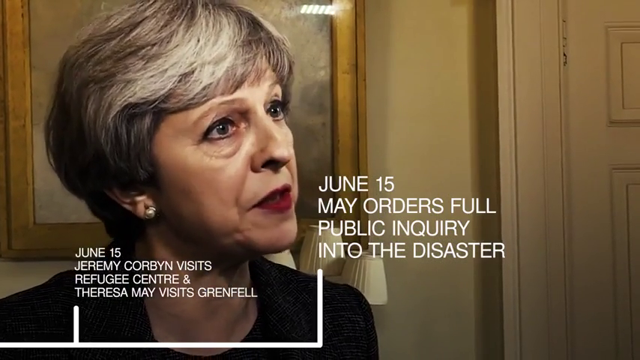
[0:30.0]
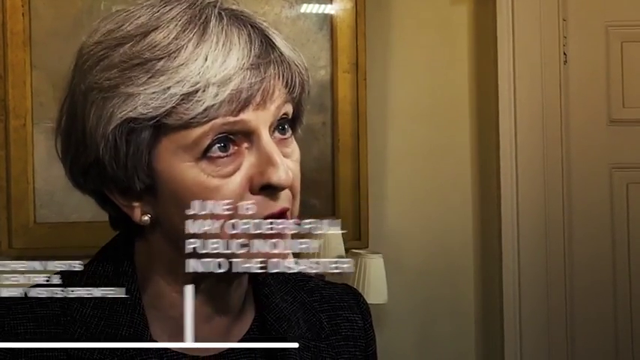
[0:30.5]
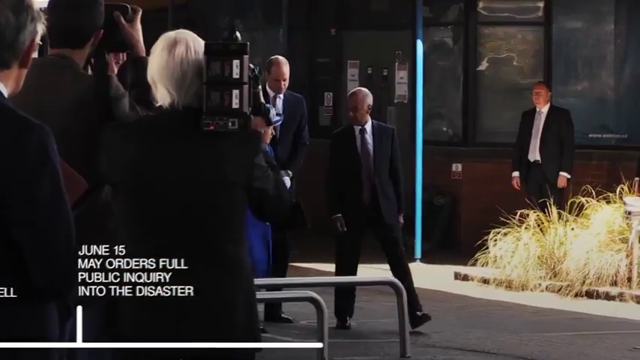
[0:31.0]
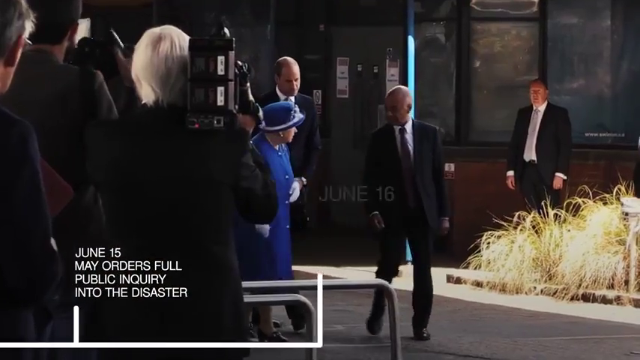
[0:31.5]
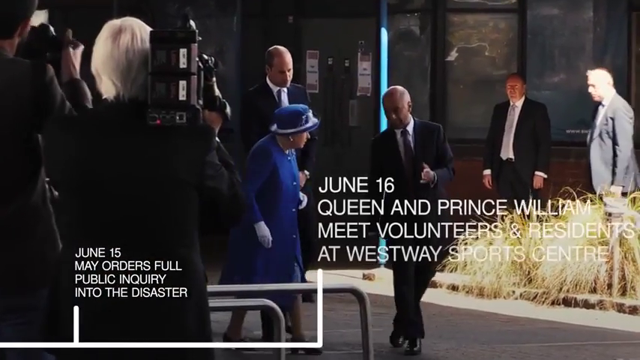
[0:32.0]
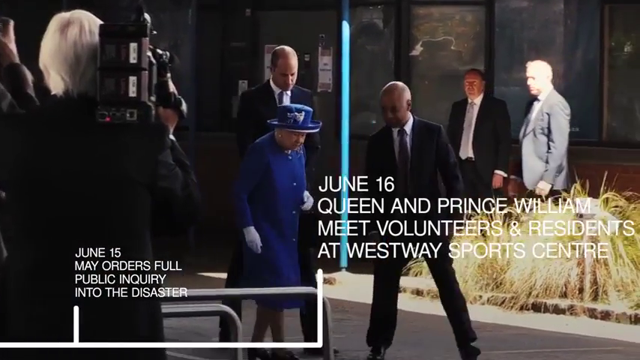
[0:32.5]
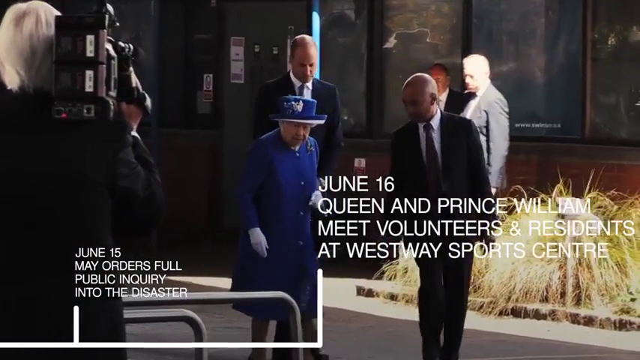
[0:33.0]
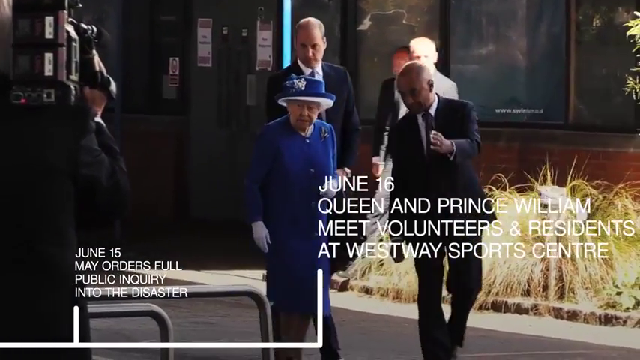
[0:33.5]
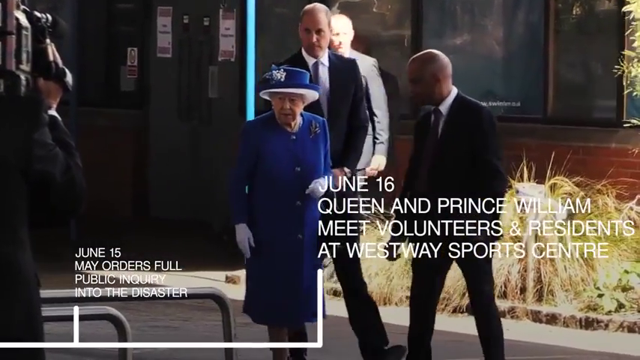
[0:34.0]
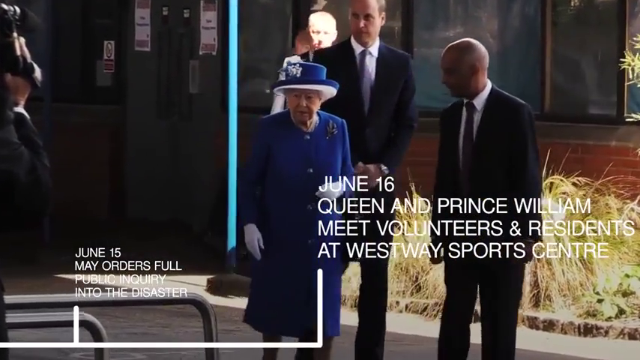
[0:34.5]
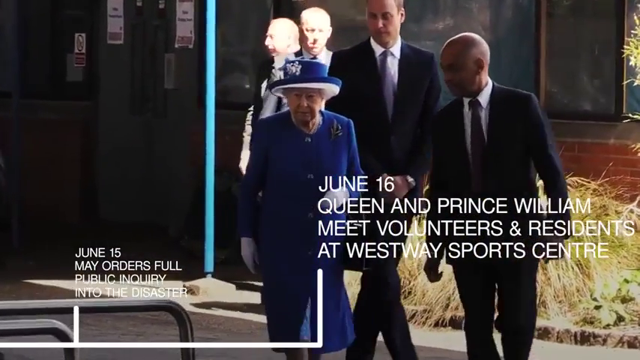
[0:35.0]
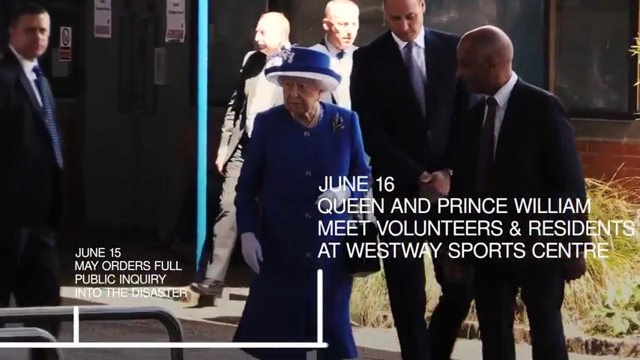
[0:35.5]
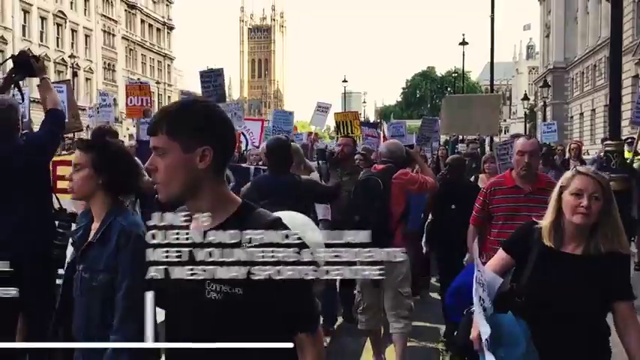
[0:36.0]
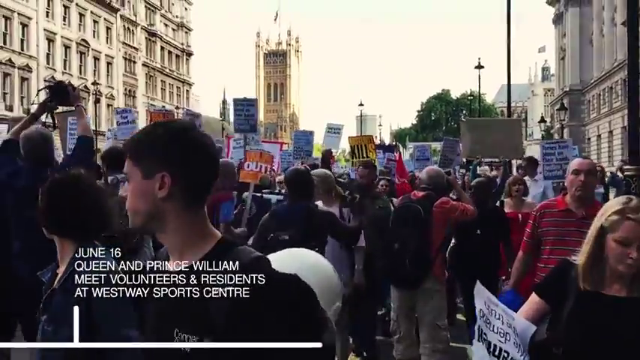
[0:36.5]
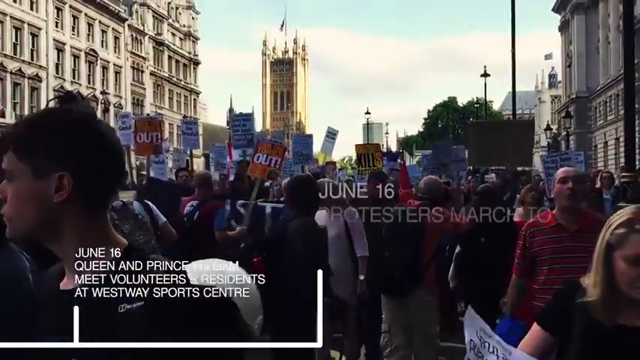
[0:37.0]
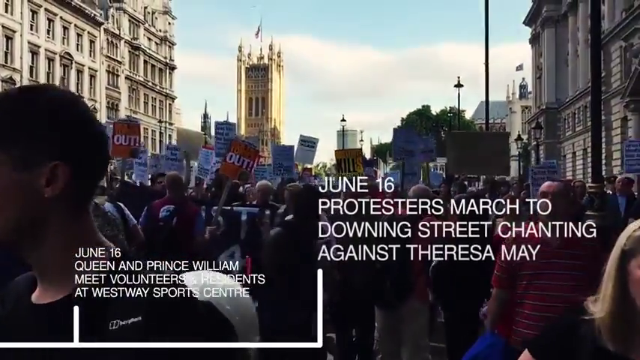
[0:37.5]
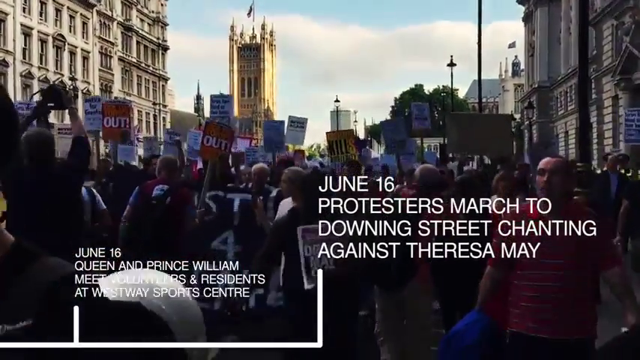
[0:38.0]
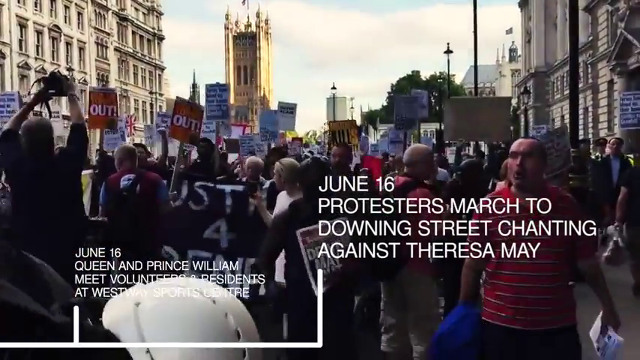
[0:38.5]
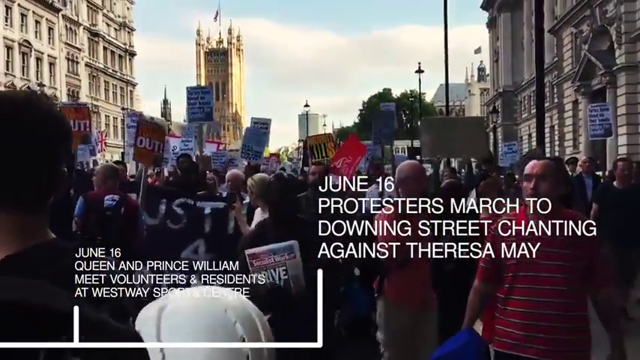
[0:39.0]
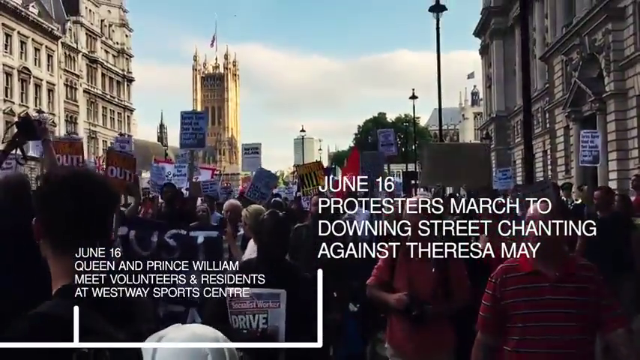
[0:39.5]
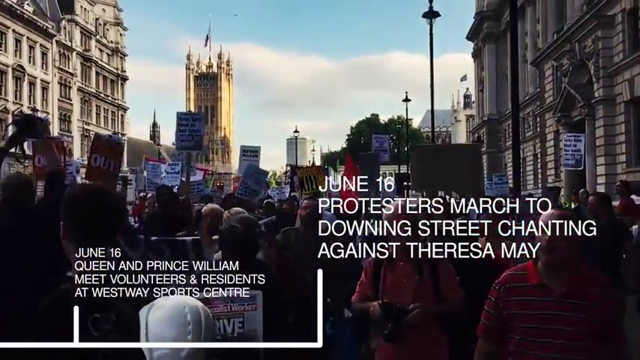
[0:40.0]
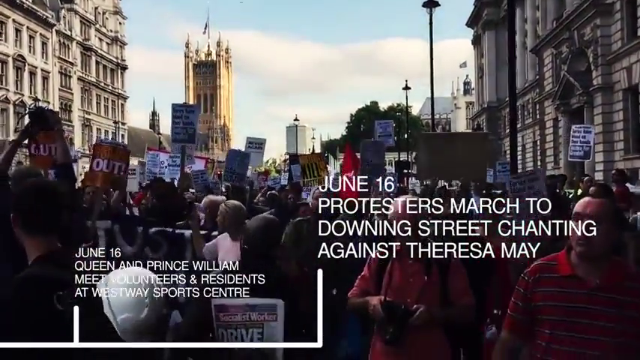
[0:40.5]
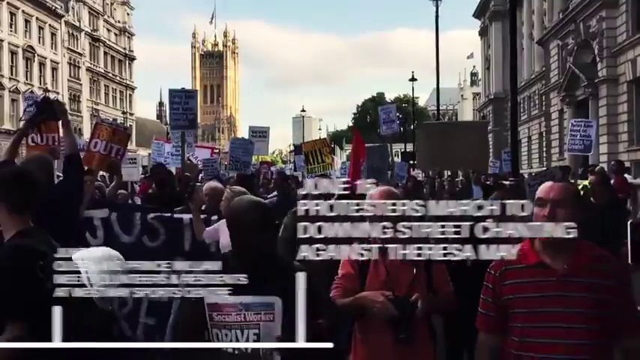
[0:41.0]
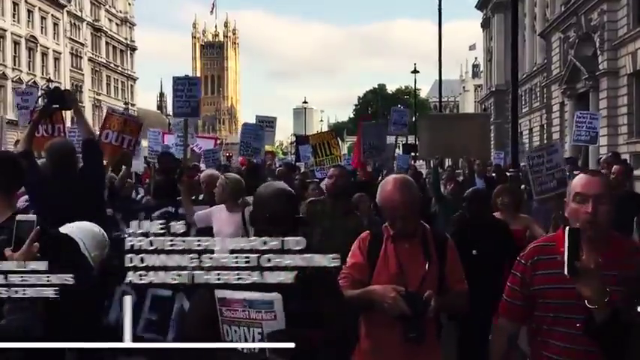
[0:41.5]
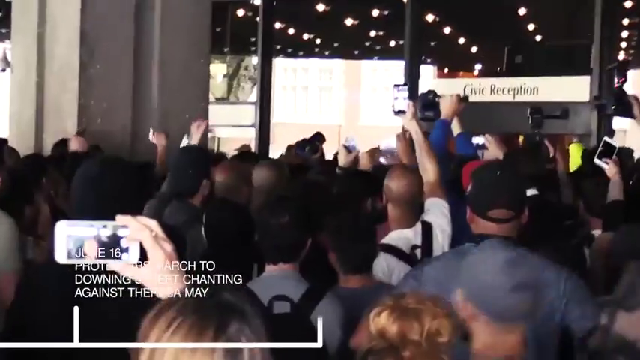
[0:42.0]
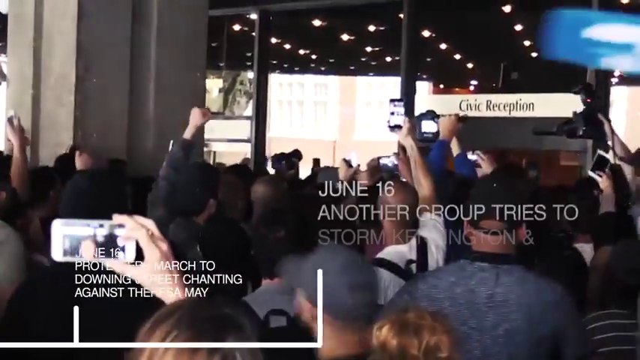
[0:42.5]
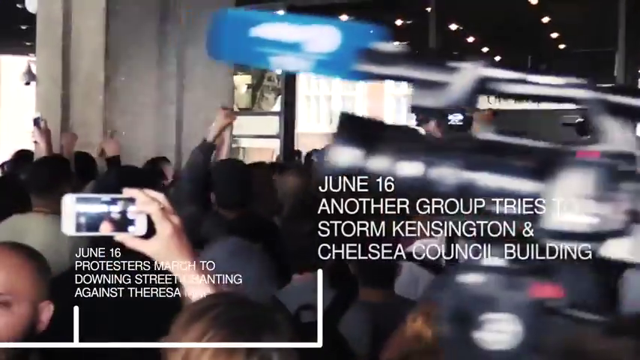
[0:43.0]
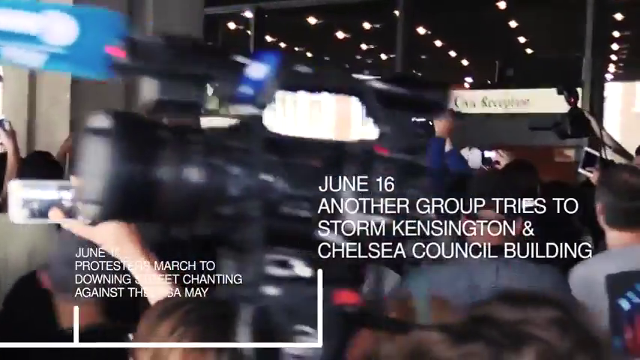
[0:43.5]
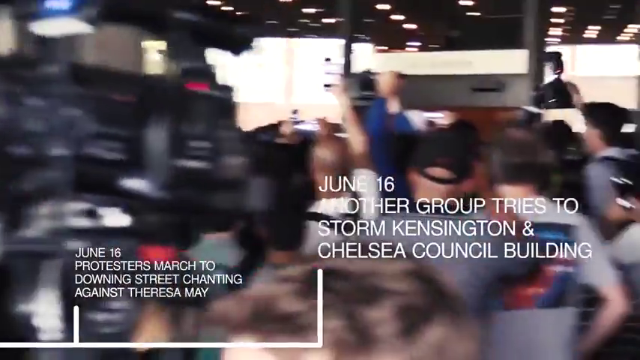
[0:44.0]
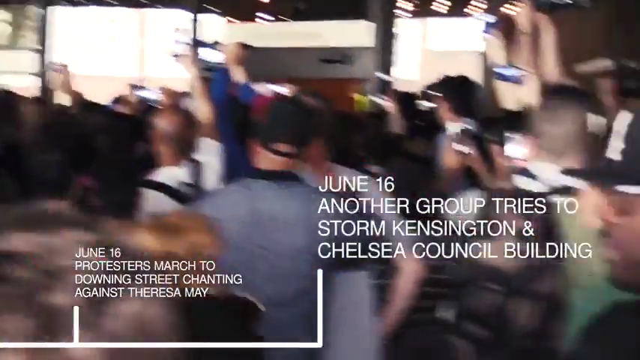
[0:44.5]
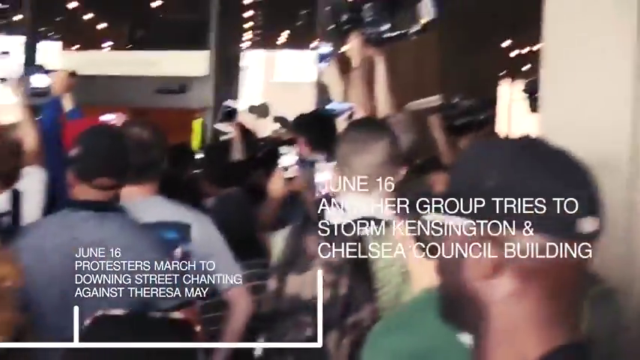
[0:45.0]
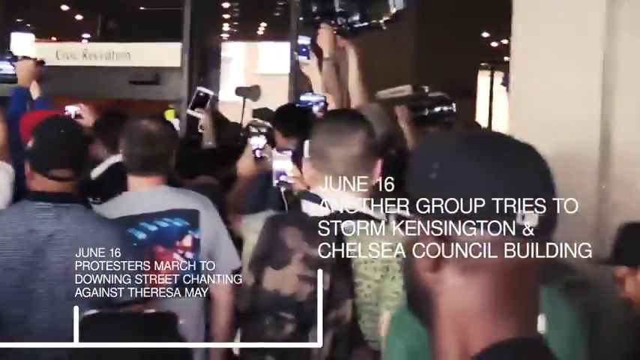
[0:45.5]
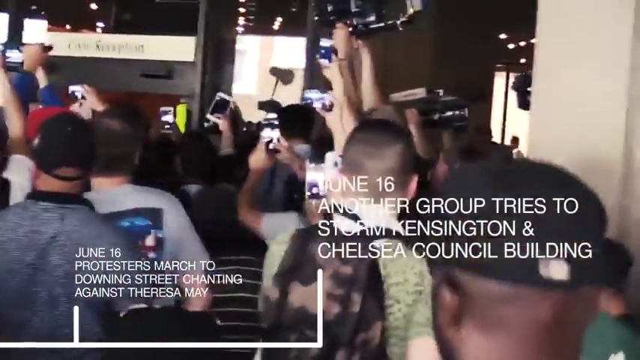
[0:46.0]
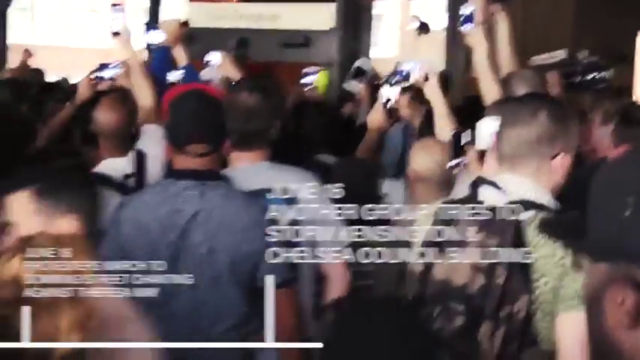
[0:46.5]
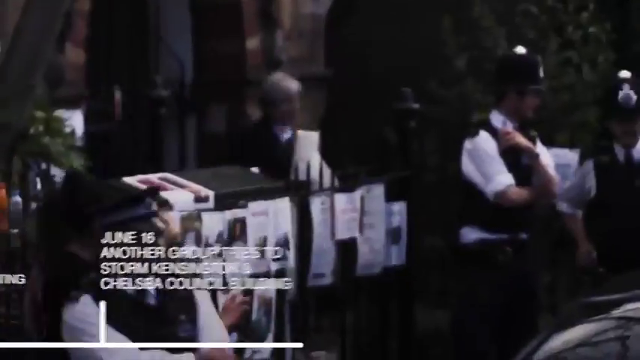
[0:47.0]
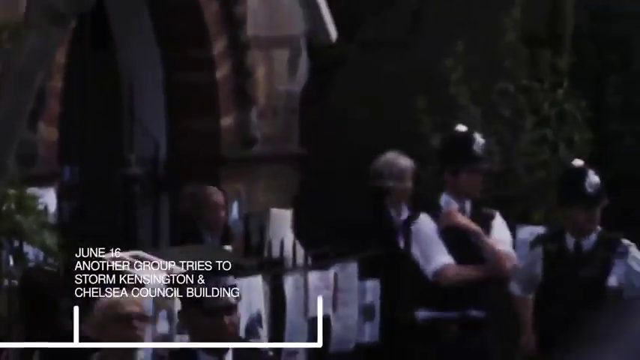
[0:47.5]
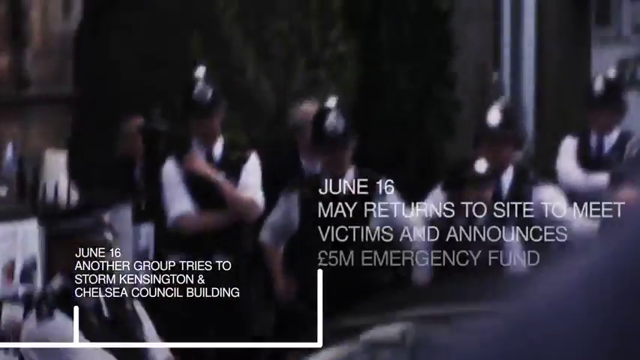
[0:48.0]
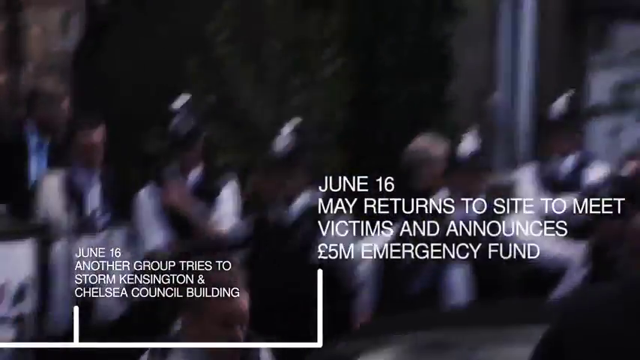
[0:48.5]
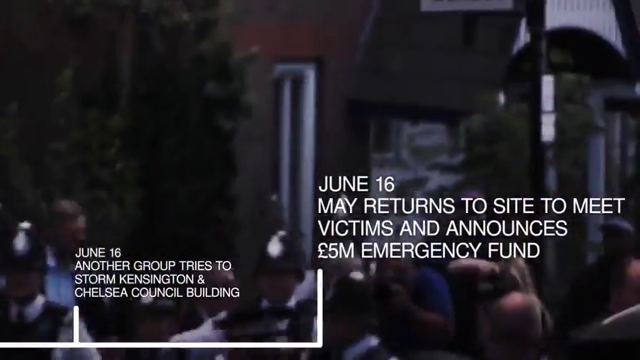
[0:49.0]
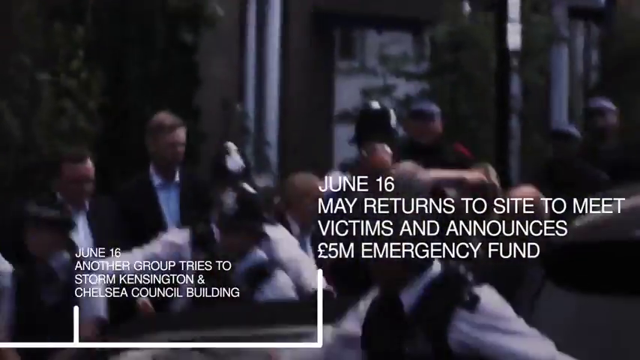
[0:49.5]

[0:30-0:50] Against a background, a woman with short white hair appears, with a door to the right. Text at the right reads "June 15, May orders, full public inquiry into the disaster." Text then shows smaller at the bottom left. Someone, possibly the queen, is at the center in a blue outfit, moving to the right, while someone to the right is pointing with her. Text at the right reads "June 16, queen and Prince William meet, volunteers arrive at Southwestern Sports Center" as she walks forward. Next there is something like a protest, with people waving their signs around; text at the right reads "June 16th, protestors march to Downing Street, chanting against" as they walk forward. The text moves down to the left, and text at the right reads "June 16th, another group tries to storm Kensington and Chelsea Council Building." Cameras and a clock are visible, text sits at the bottom left, and text at the right reads "June 16th, May returns, decides to meet victims and announces 5 million emergency funds."